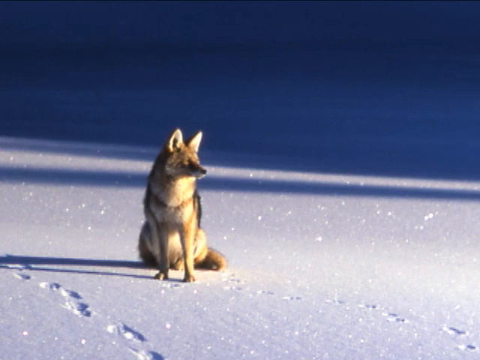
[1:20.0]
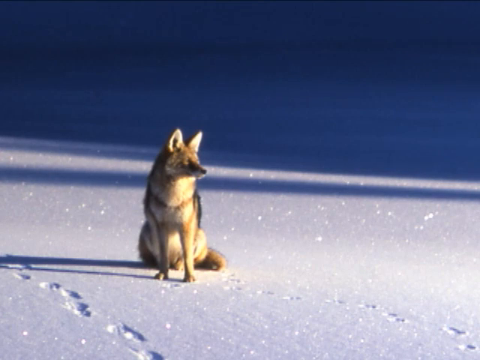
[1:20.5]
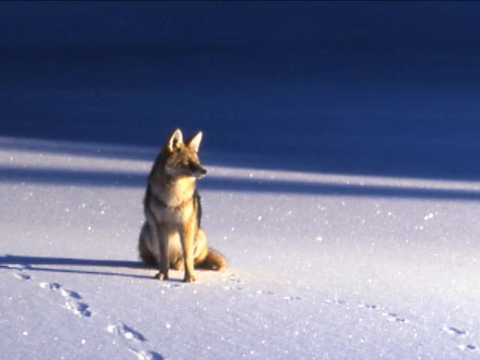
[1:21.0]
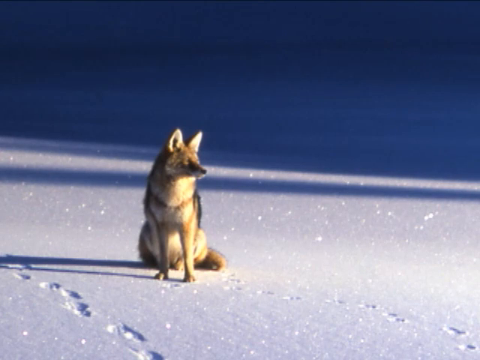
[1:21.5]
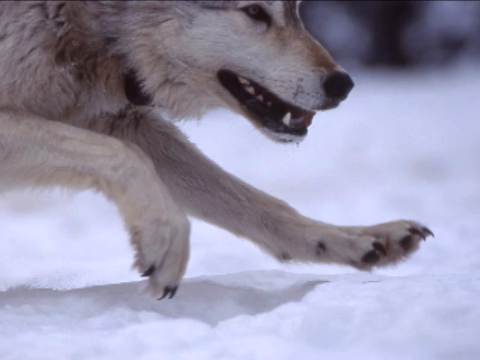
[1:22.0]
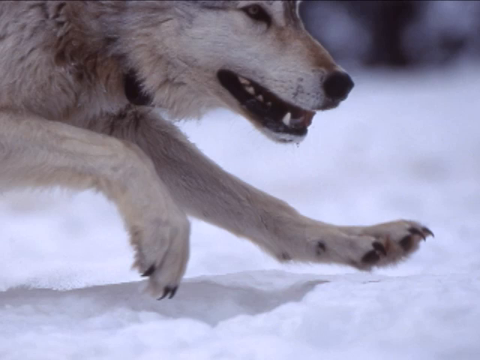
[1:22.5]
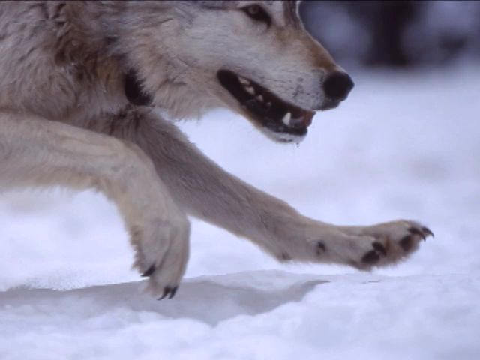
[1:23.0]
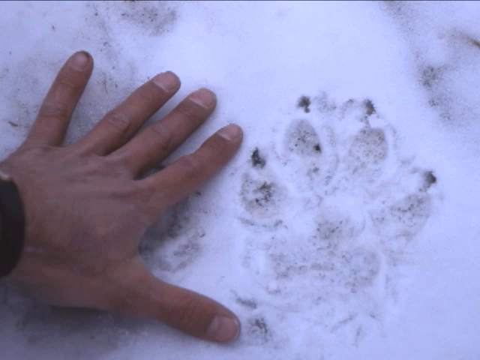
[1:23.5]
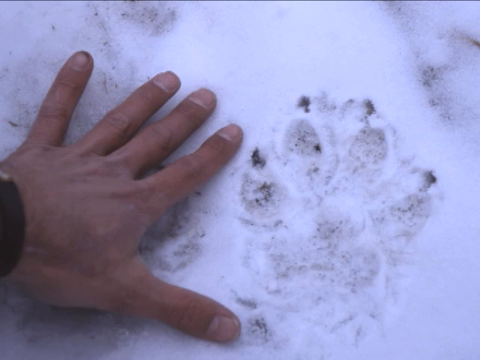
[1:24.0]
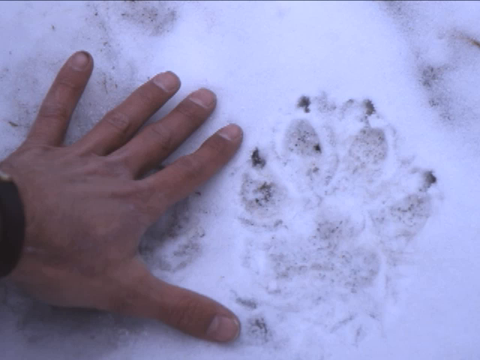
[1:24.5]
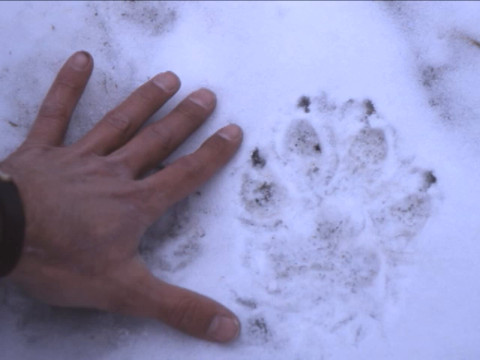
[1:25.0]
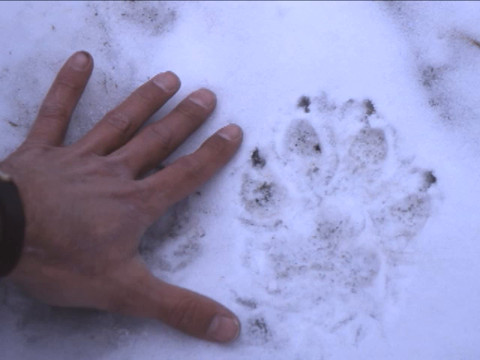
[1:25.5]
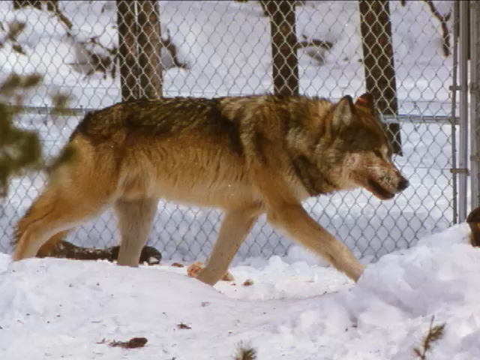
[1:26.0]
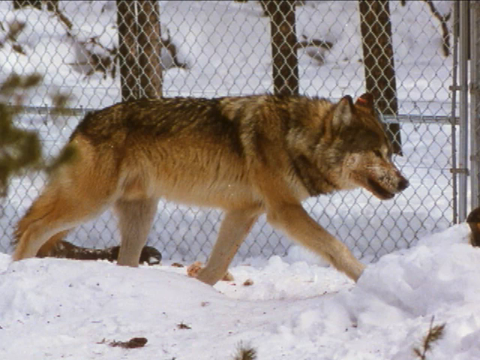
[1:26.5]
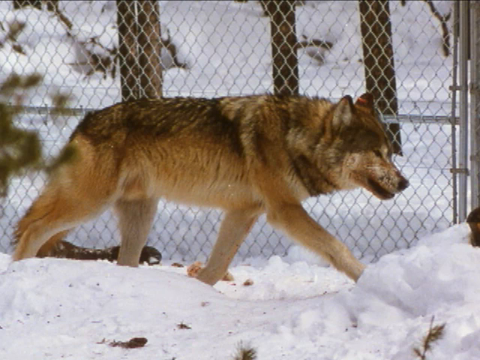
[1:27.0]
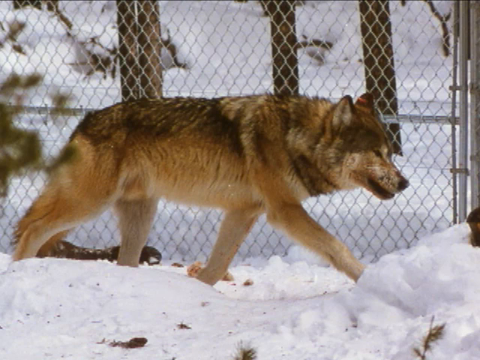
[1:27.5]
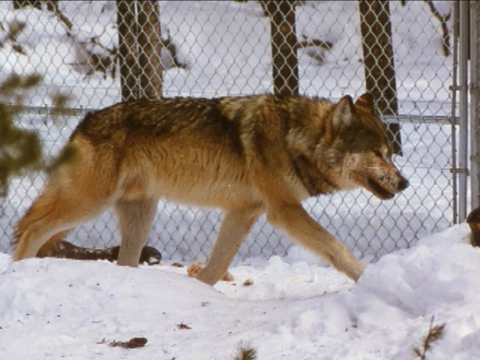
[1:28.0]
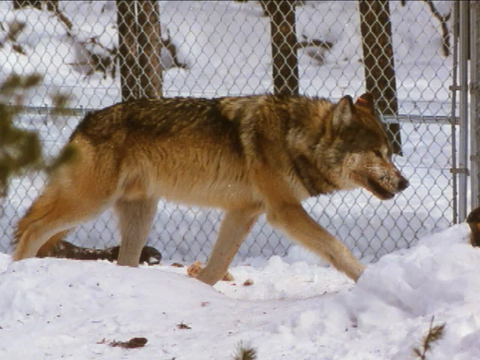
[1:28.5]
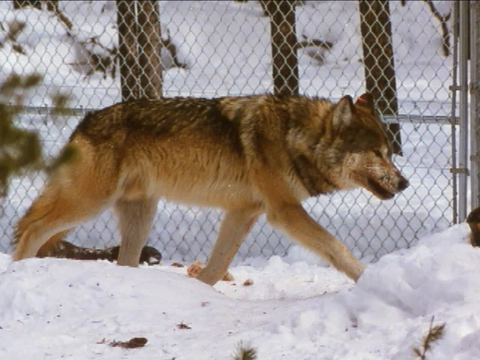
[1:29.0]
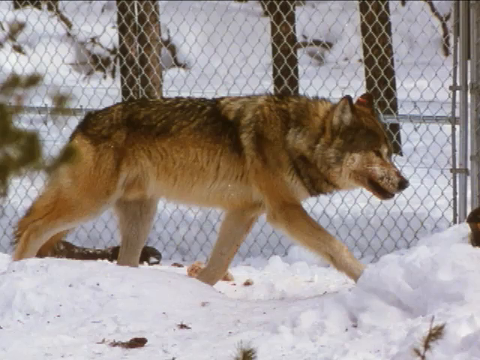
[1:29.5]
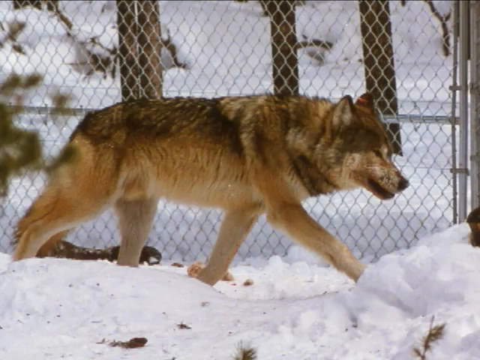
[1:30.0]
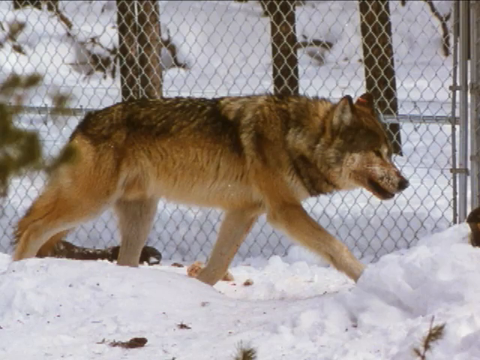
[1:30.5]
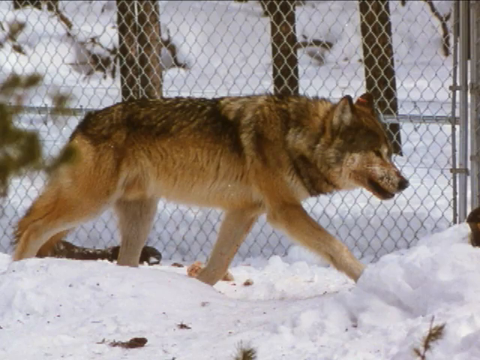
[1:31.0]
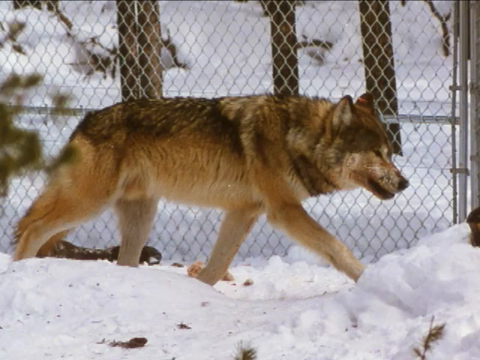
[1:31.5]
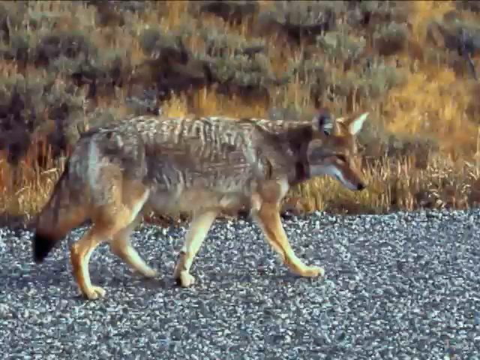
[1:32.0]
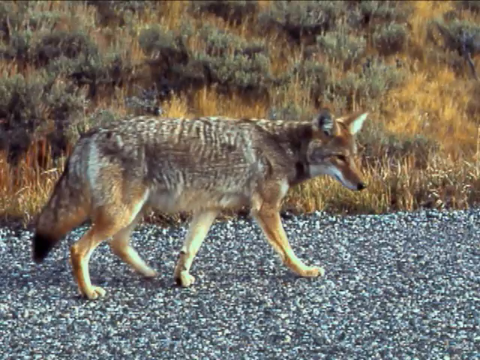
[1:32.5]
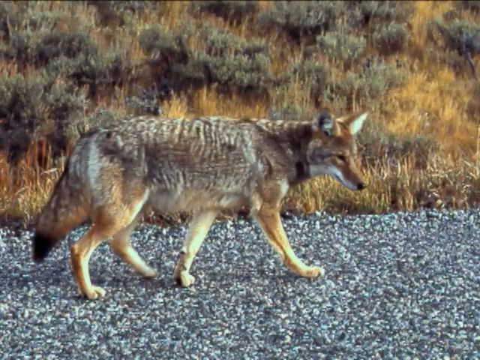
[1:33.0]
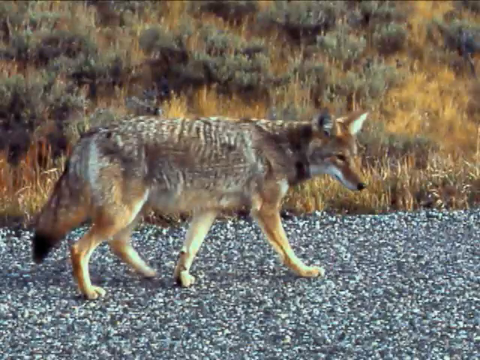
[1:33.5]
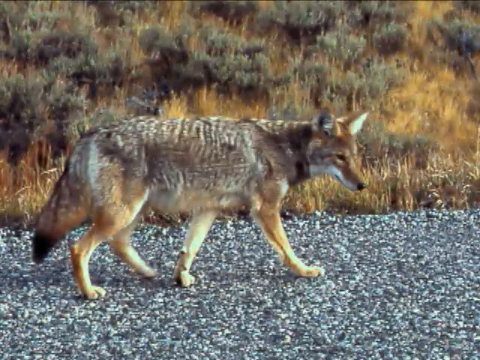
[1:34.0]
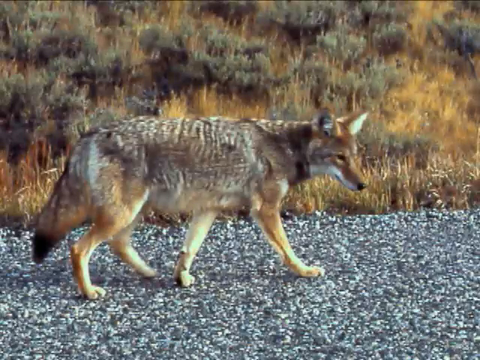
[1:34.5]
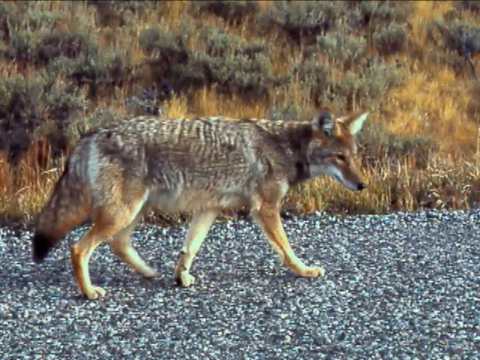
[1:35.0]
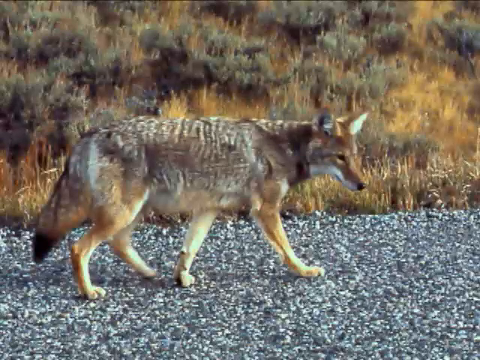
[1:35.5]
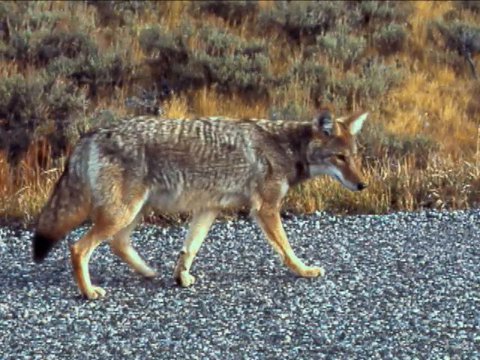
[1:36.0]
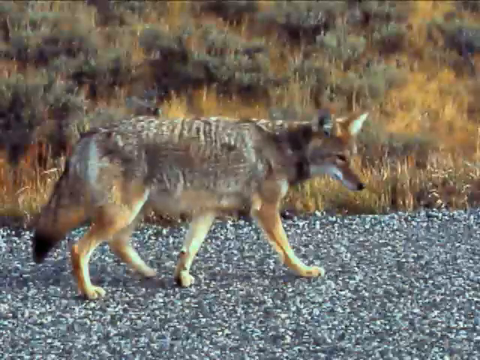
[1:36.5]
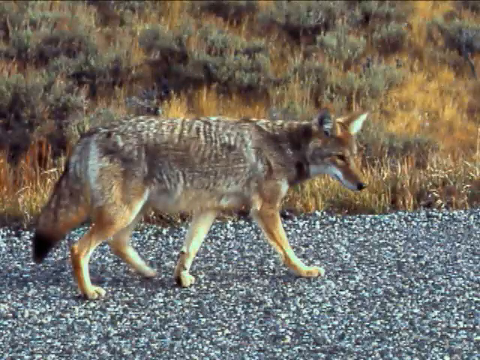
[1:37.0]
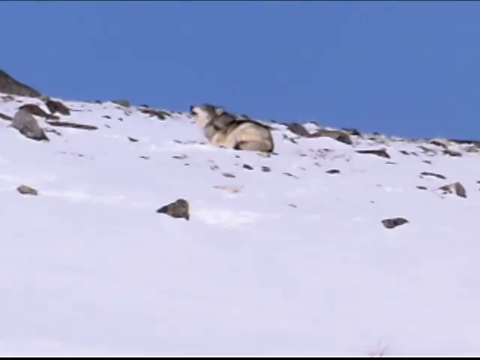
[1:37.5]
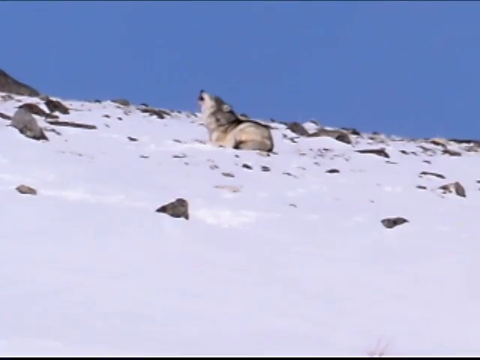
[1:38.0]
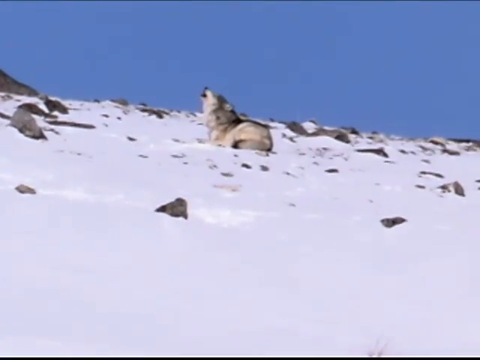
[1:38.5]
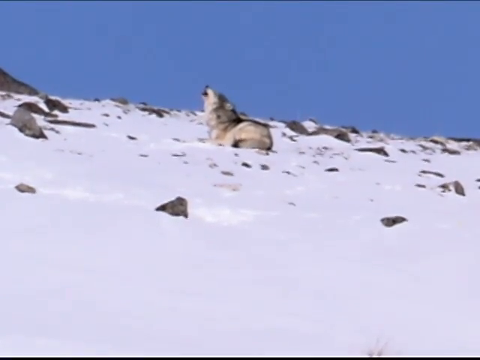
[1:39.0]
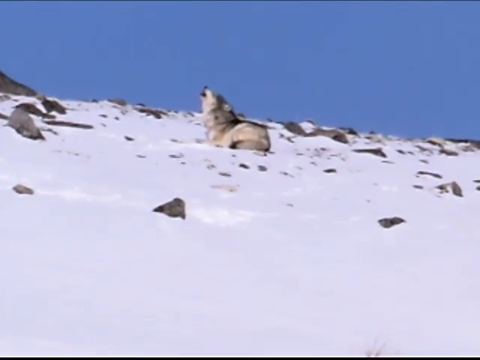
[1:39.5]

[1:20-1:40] A canine's jowls and front two paws and claws are visible as it runs on a snowy landscape. Next is a picture of a man's left hand on the ground, next to what looks to be a wolf standing in front of a fence, walking along to the right in the snow; it has a brown and white coat. A picture follows of a desert-type area with plants low to the ground. This is replaced by a gray wolf with a white underbelly howling at the blue sky, sitting on the side of a snowy mountainside. An image then shows a coyote sitting on its hind legs, looking off to the right side of the screen. Paw prints in the lower left corner lead off the screen, and there is snow along the ground. A shadow in the background covers half the picture, while the coyote sits in the sunlight.